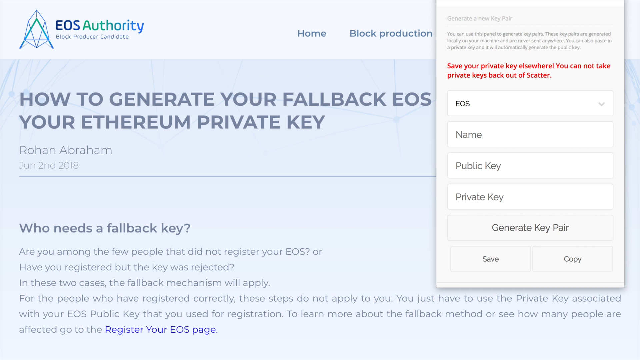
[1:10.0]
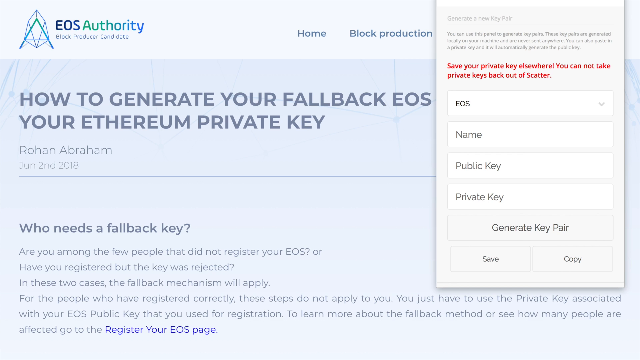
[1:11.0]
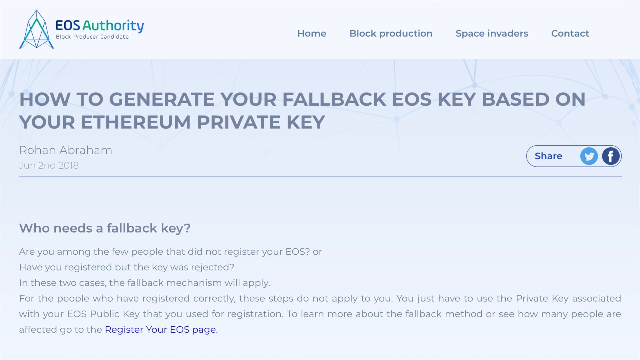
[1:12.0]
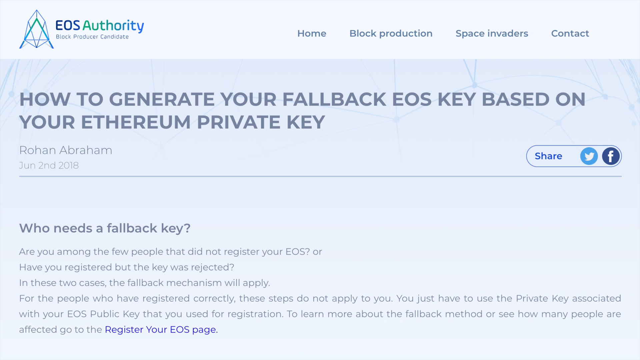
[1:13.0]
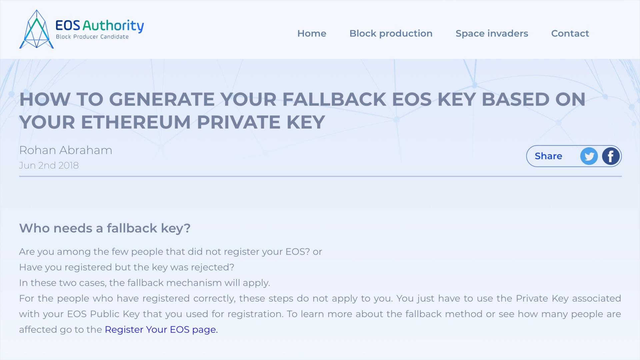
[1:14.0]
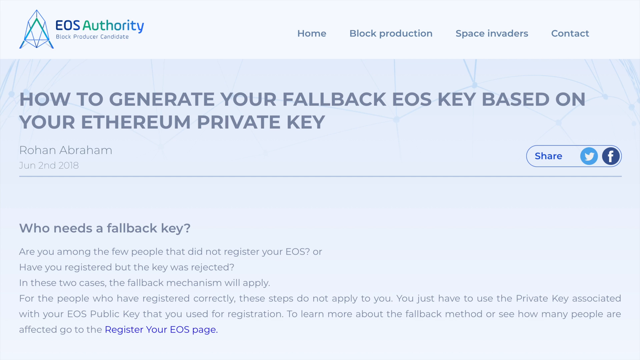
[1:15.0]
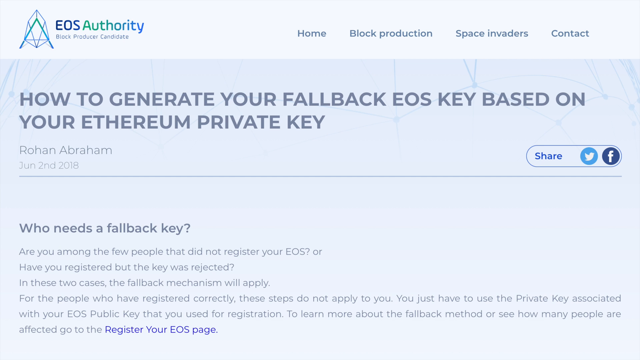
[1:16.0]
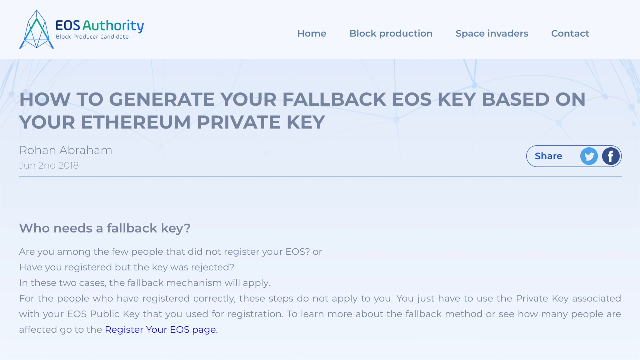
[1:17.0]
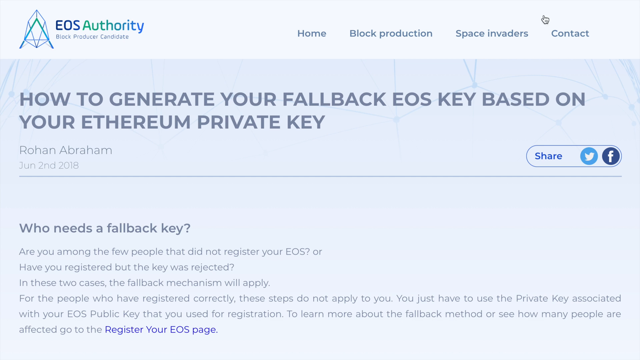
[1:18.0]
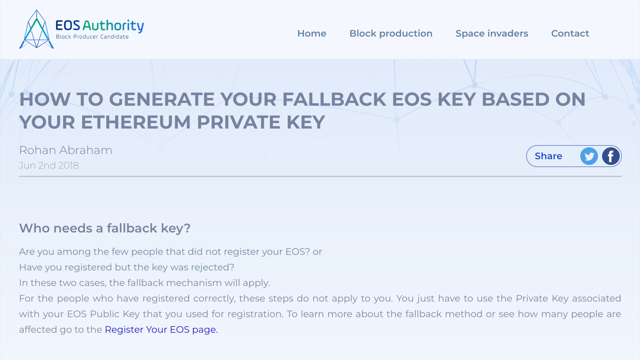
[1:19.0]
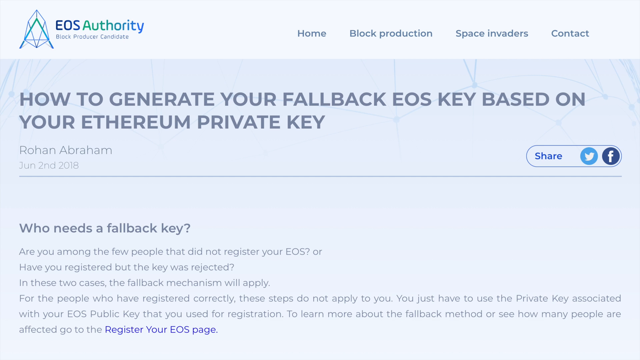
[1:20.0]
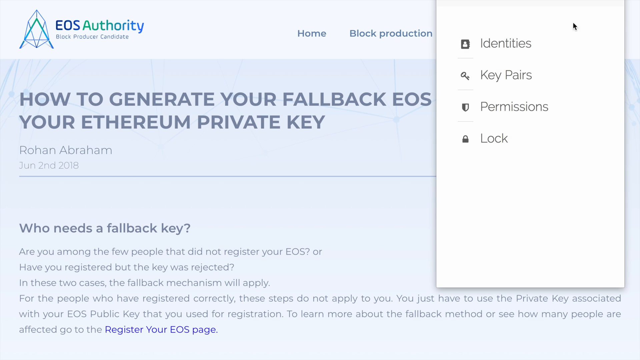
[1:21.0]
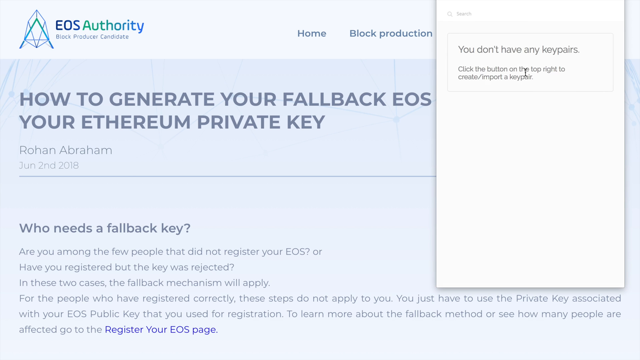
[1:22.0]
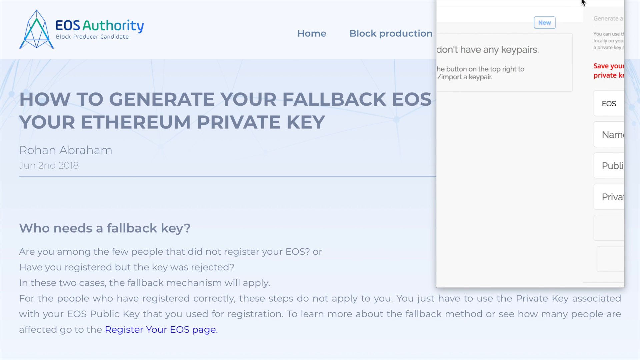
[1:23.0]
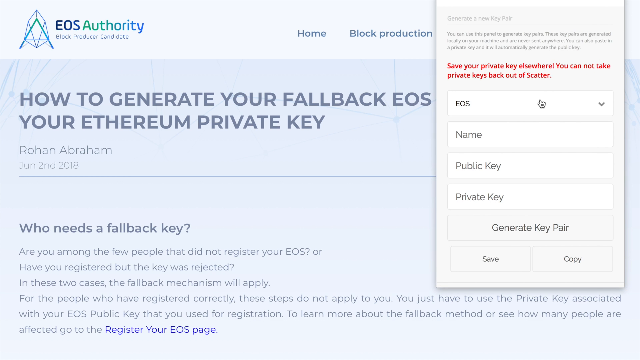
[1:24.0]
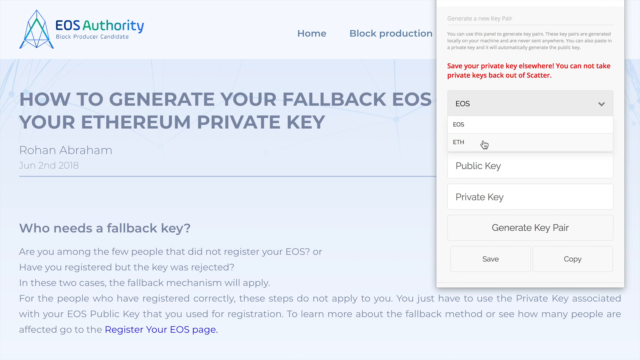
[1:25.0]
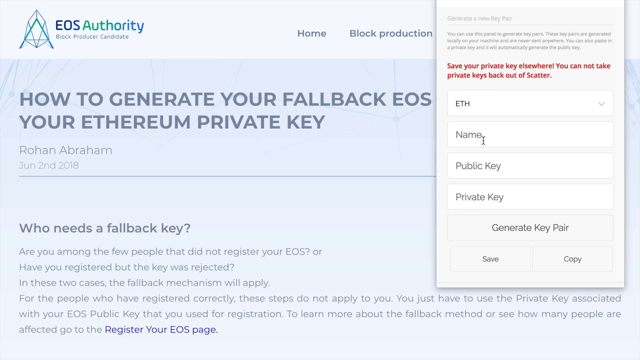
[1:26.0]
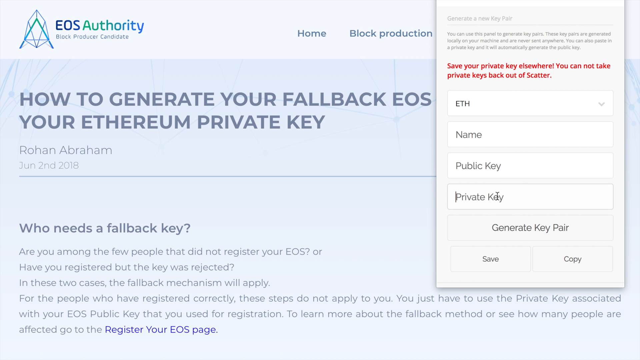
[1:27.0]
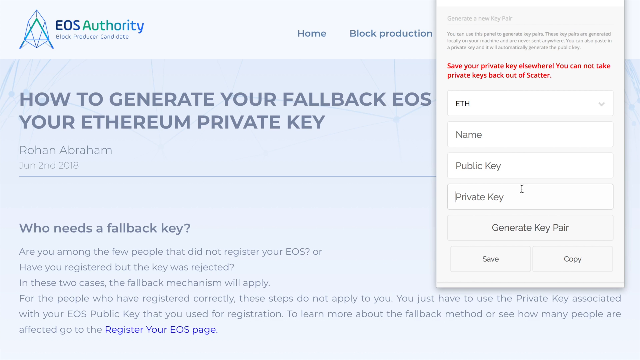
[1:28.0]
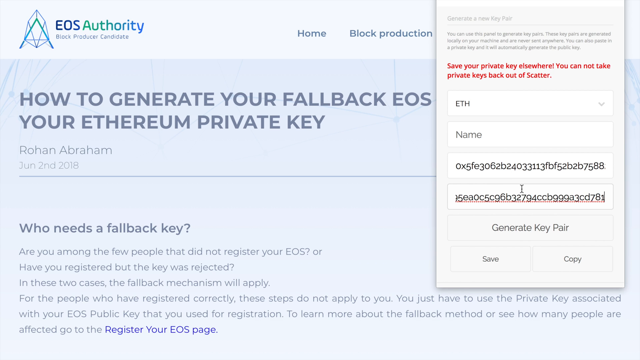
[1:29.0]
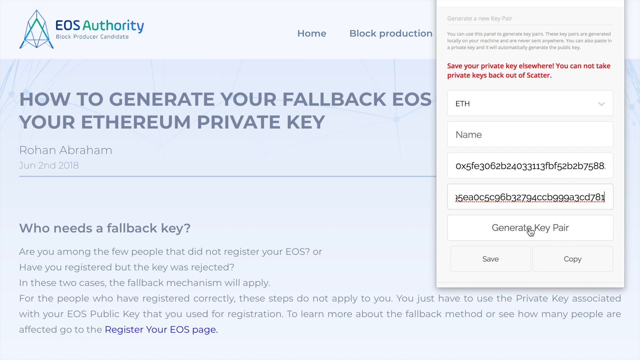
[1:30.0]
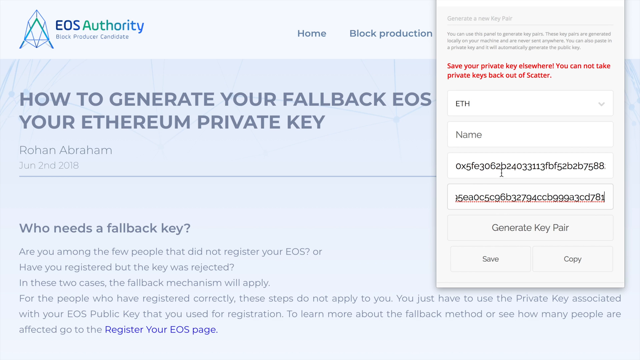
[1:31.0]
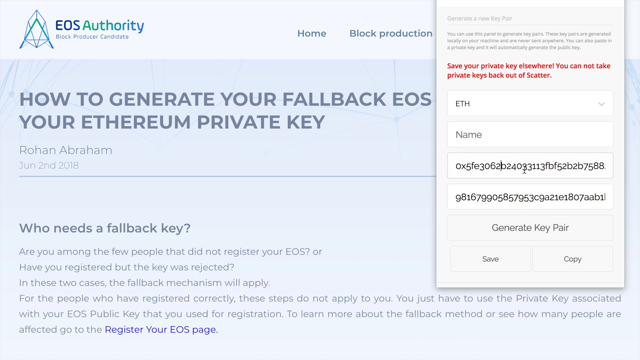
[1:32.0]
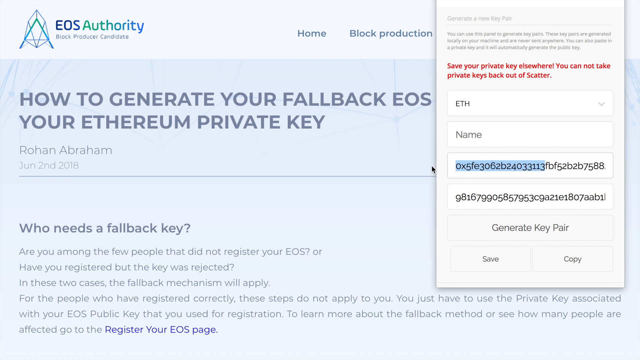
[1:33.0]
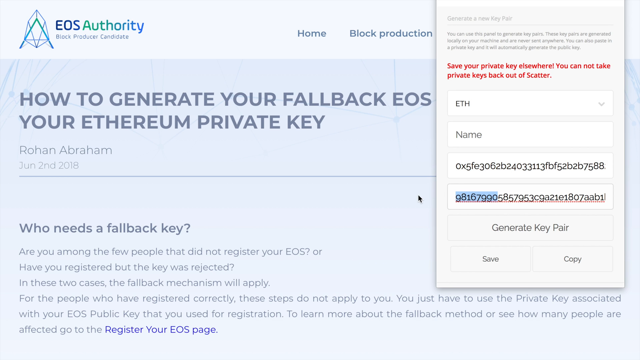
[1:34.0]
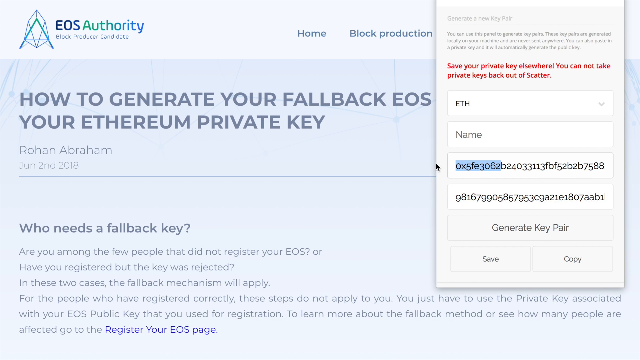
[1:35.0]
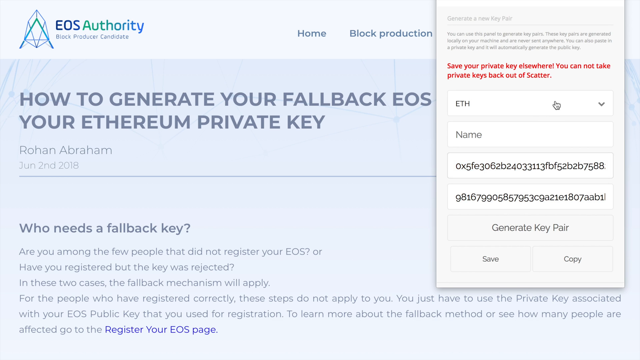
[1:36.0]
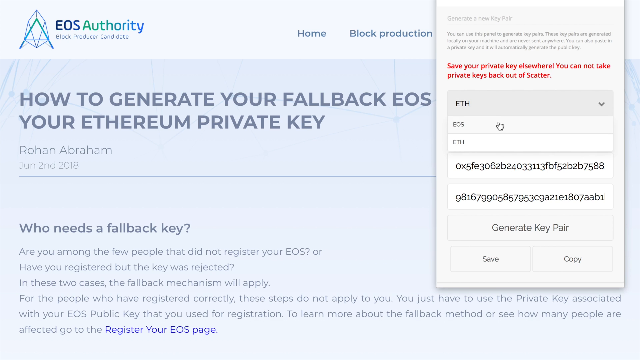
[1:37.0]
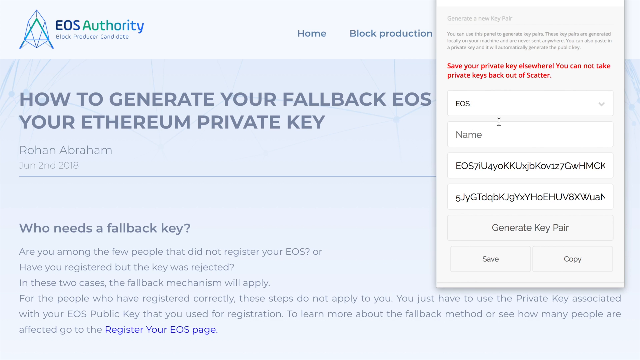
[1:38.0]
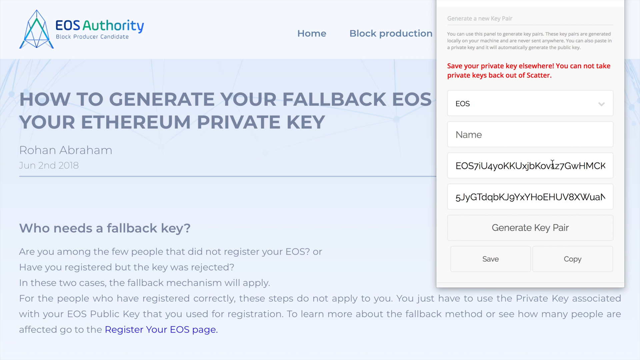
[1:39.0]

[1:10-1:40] Text in red font says to save the information. The cursor clicks on the far right to check whether there are any key pairs. There is an option to switch from Ethereum to something else, along with fields for a name and a private key and buttons for generate key pair, save, and copy. After switching from Ethereum to something else, a name, public key, and private key are typed in and the key pair is generated again. Directions are shown on a small side tab on the right. The text reads "save your private key elsewhere. You cannot take keys back out of Scatter."